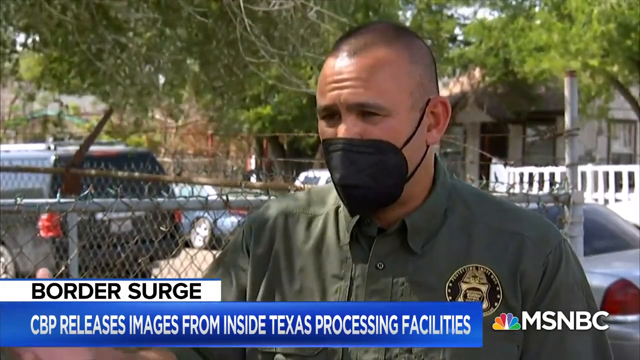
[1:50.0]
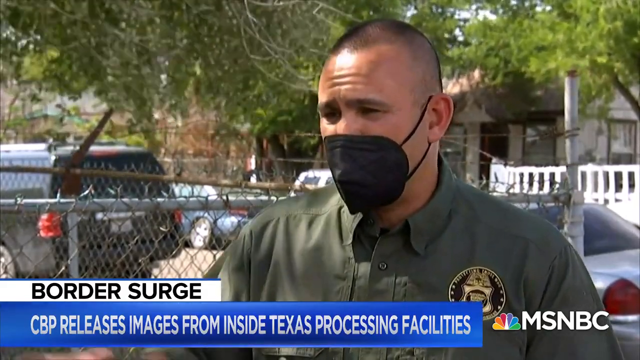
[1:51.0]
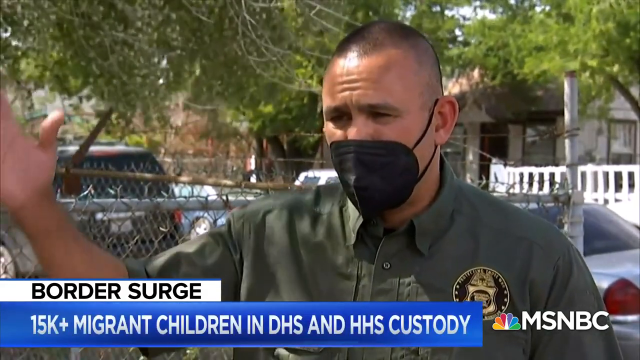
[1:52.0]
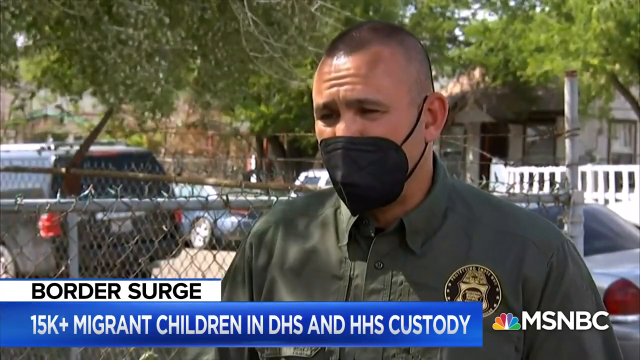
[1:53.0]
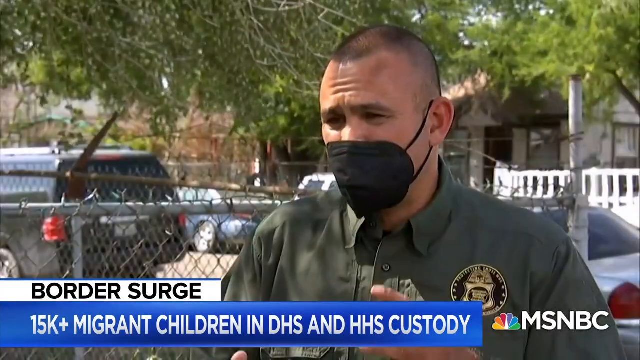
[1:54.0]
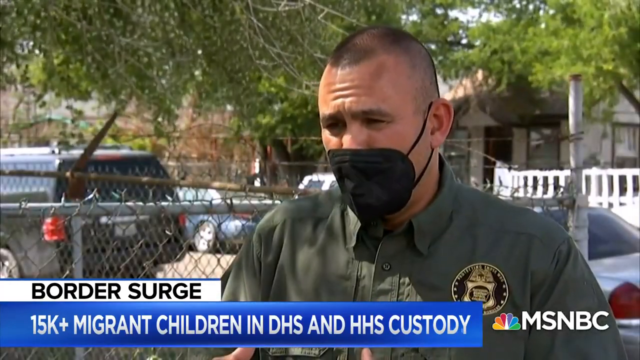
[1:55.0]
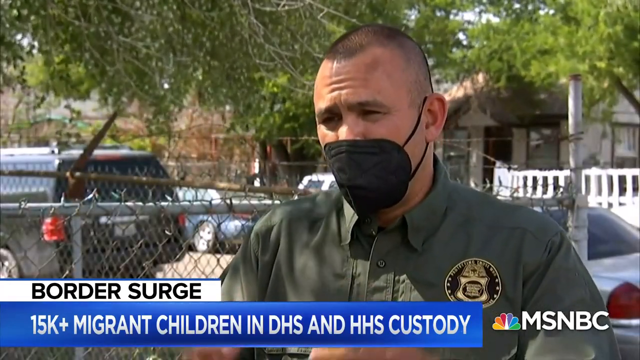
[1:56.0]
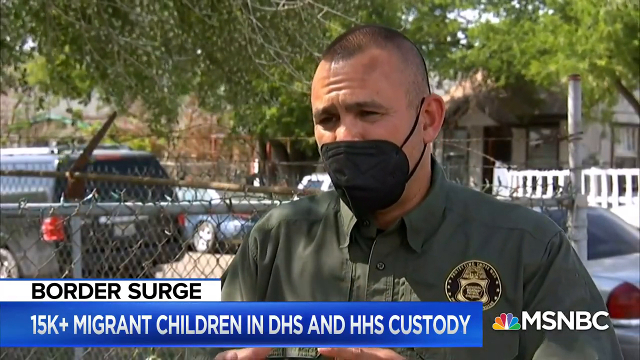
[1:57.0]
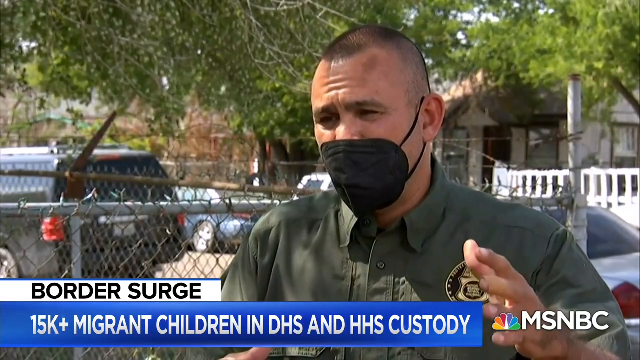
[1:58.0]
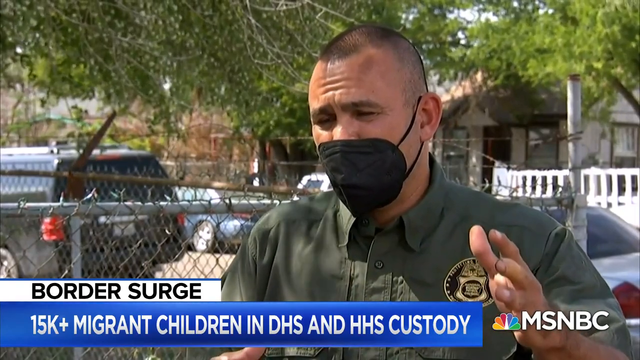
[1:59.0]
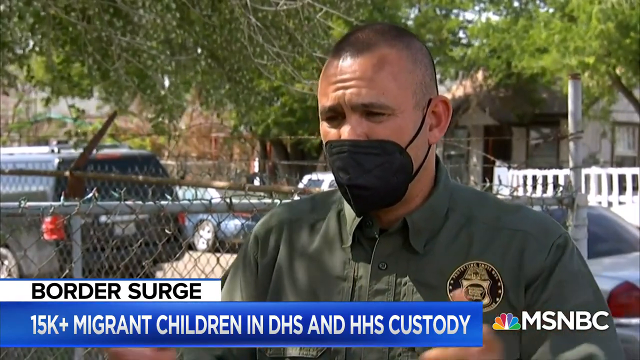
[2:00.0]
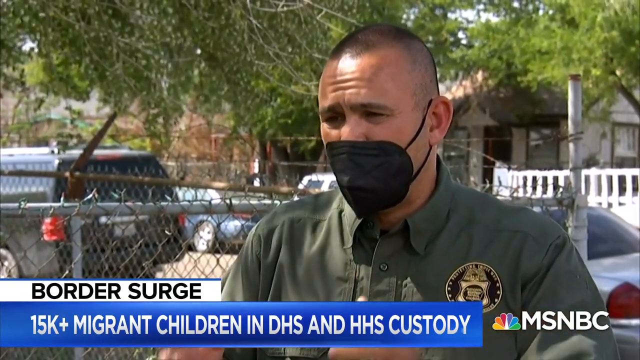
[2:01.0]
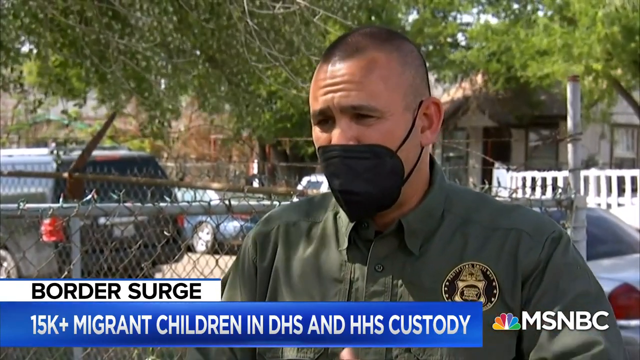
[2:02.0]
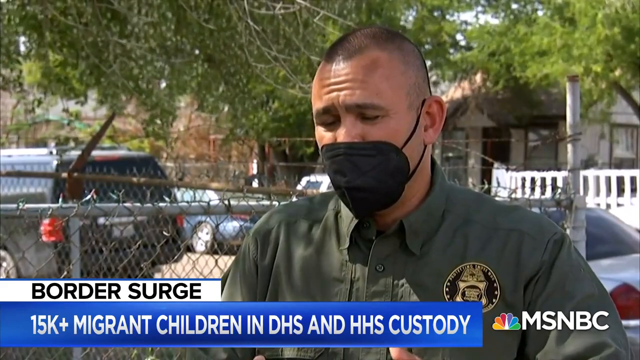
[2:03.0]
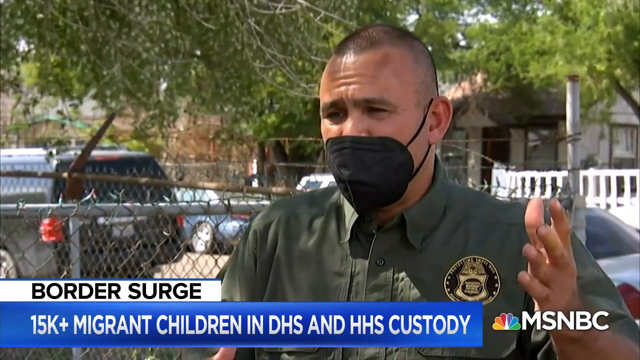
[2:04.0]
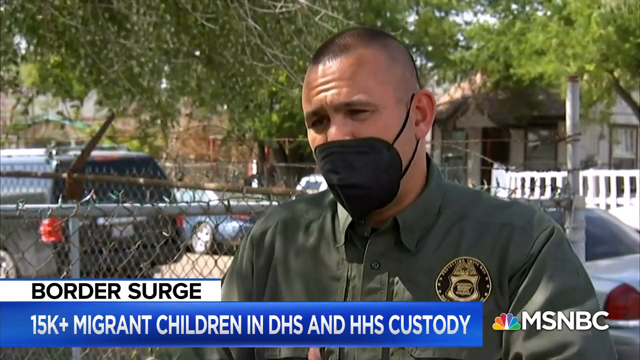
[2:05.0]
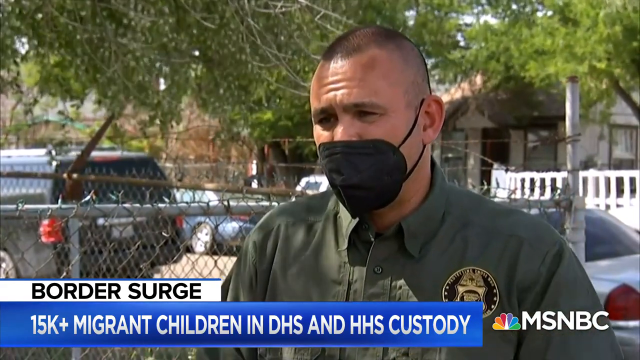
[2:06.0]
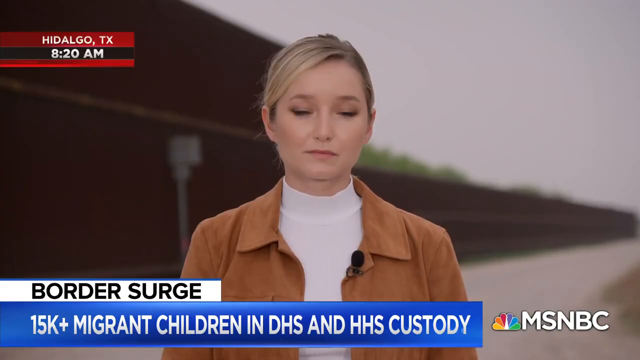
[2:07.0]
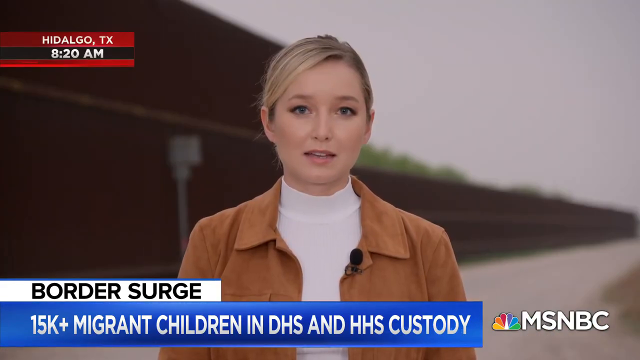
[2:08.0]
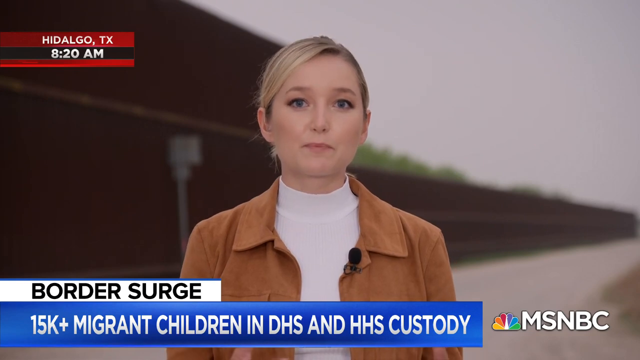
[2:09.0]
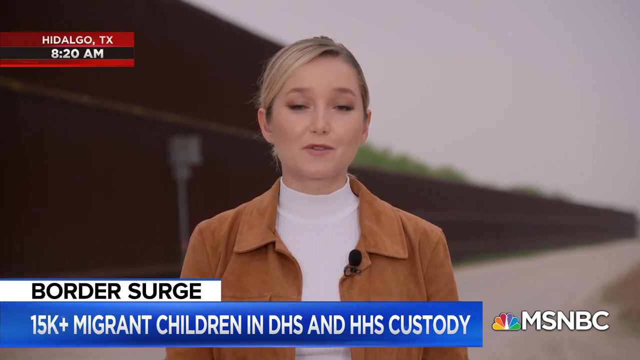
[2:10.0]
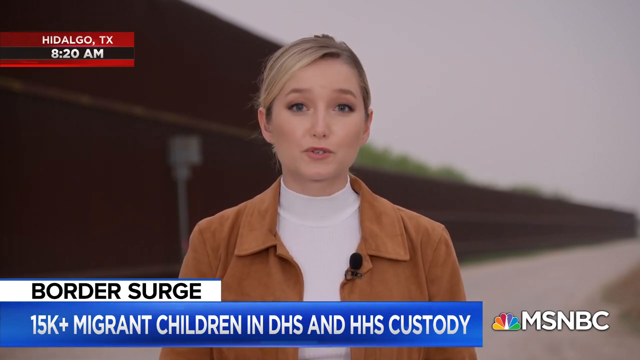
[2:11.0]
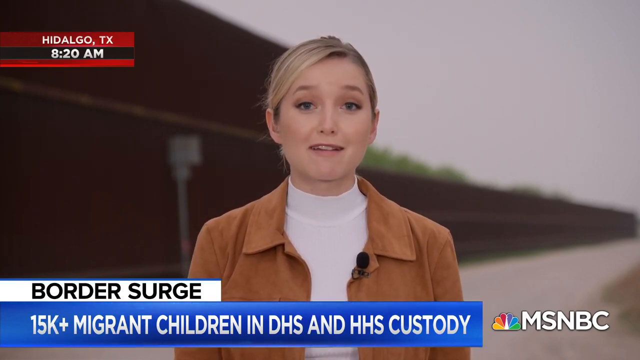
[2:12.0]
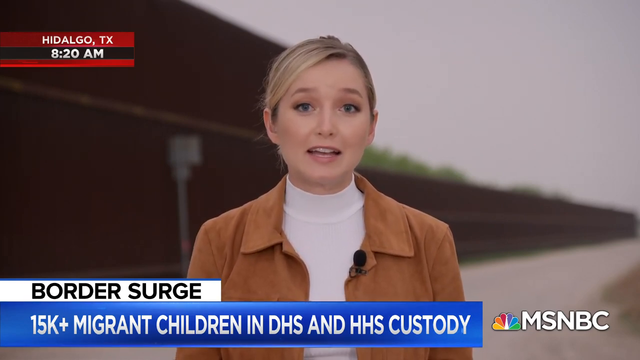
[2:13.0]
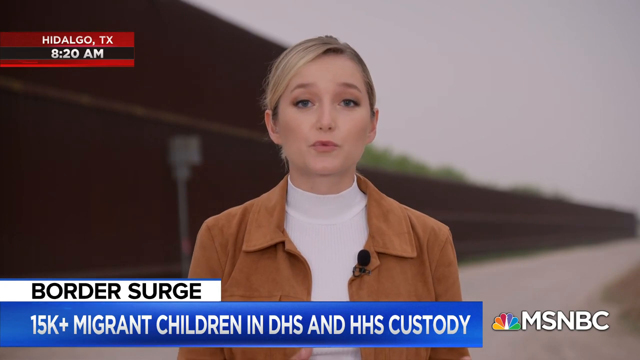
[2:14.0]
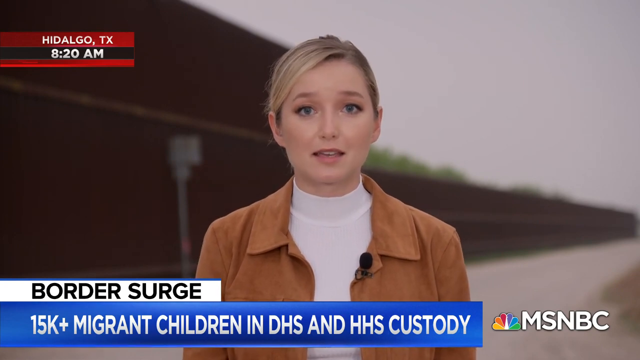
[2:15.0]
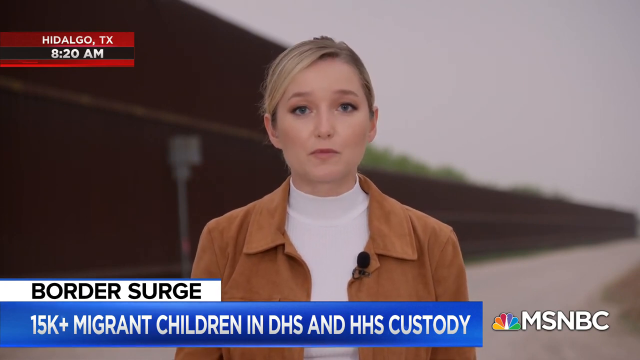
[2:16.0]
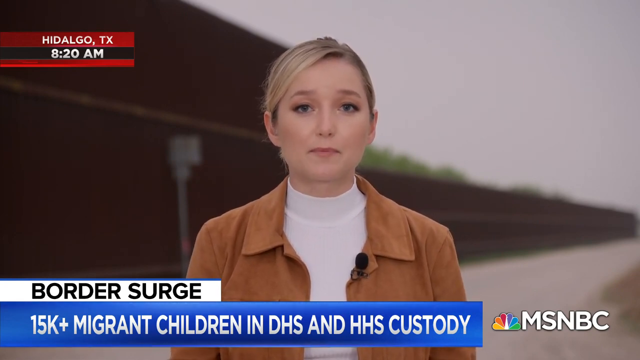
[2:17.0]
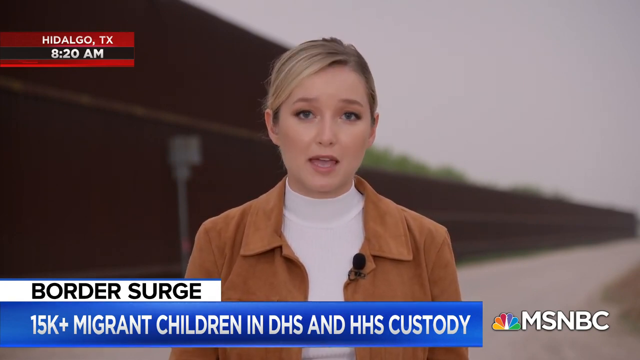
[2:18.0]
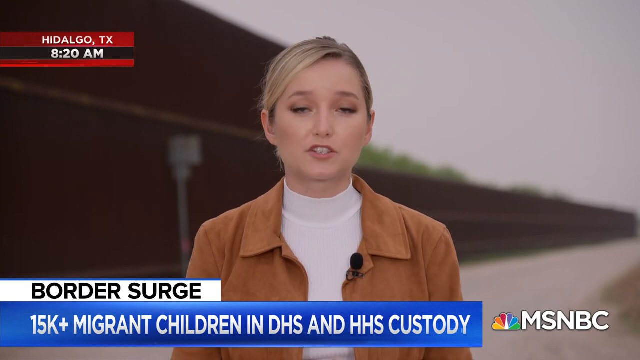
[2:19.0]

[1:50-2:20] The same officer continues speaking into the camera, raising his right arm and hand as if to emphasize his point. A flash follows, which almost looks like a cut to a different part of the interview. He is still talking, now moving his left hand slightly side to side and nodding his head slightly at certain points. The video then returns to the female reporter with blonde hair and a tan jacket, still outside, presumably outside the building seen in the earlier footage. She continues talking into the camera with little facial expression, nodding slightly up and down as she speaks.